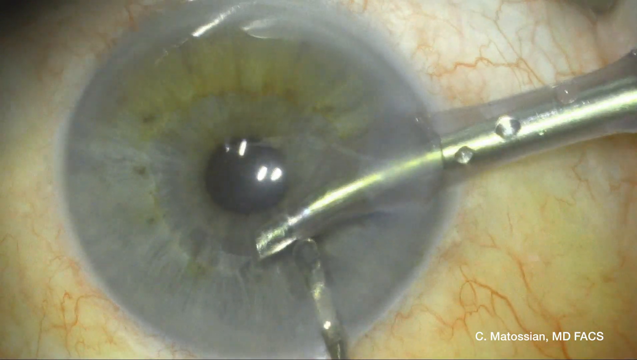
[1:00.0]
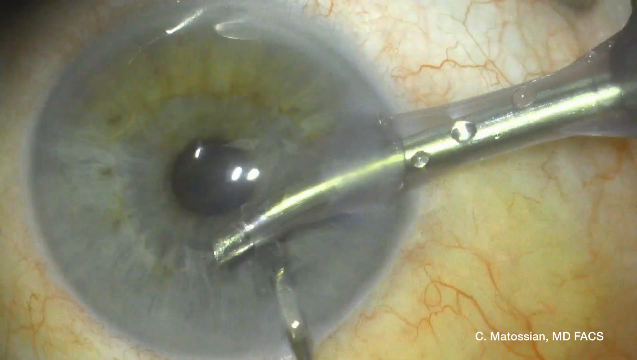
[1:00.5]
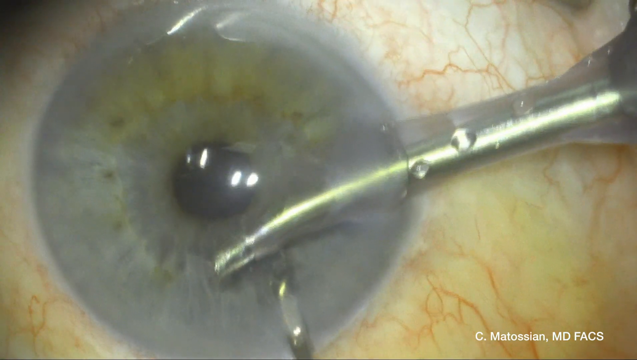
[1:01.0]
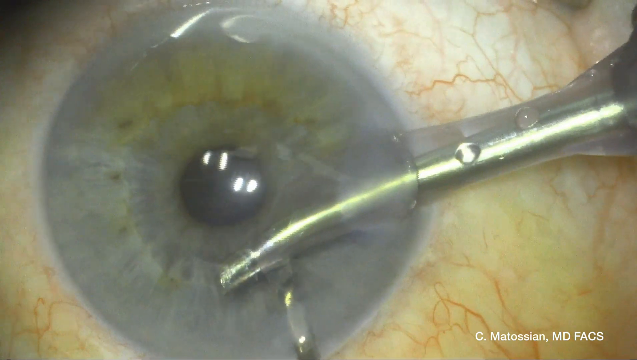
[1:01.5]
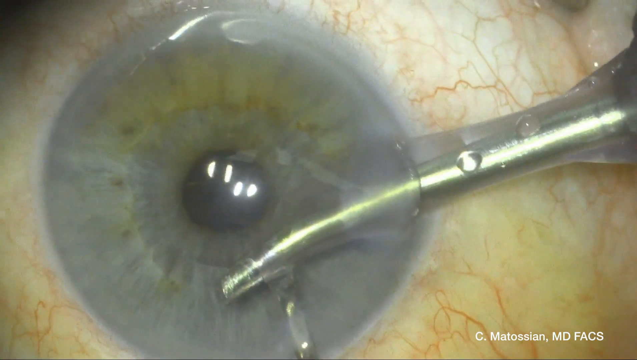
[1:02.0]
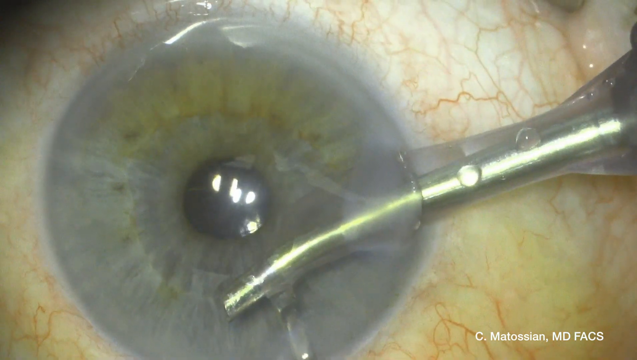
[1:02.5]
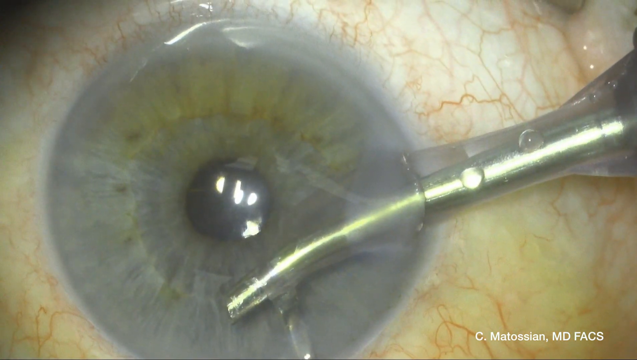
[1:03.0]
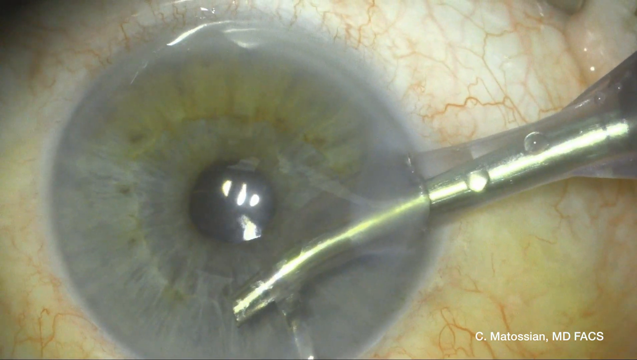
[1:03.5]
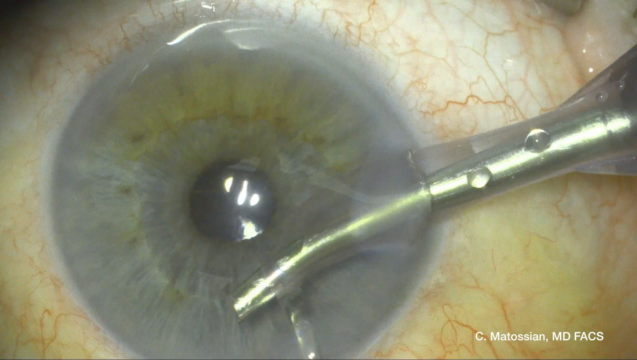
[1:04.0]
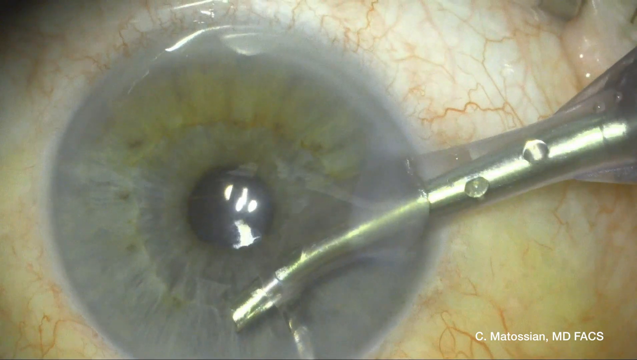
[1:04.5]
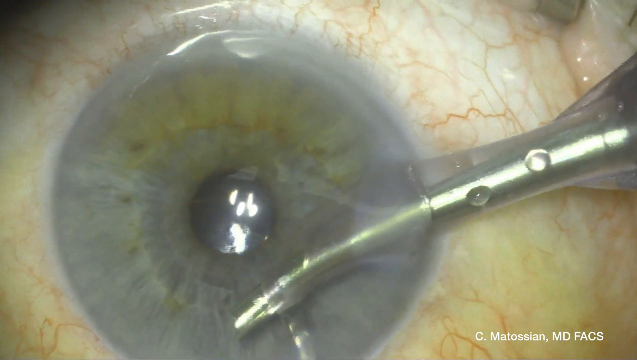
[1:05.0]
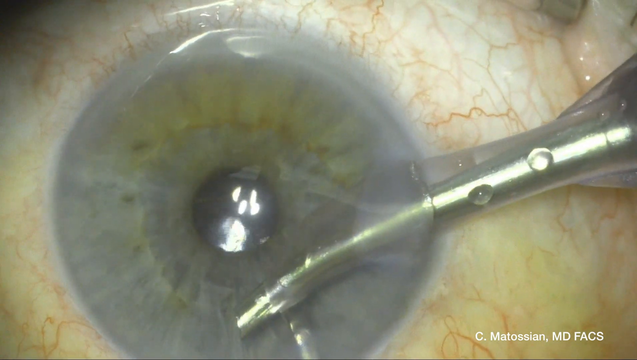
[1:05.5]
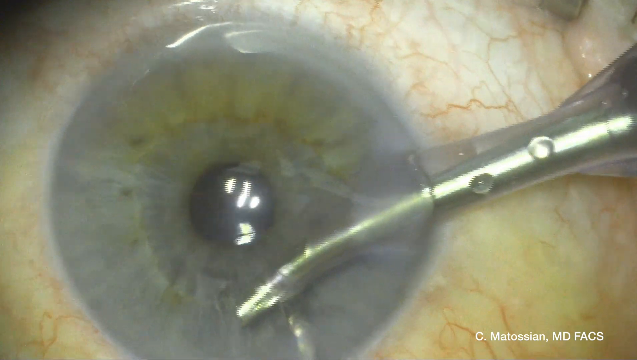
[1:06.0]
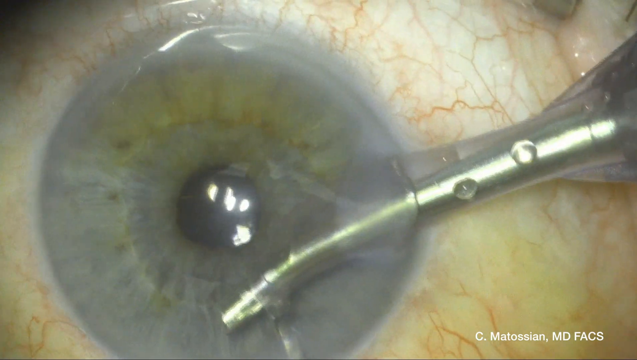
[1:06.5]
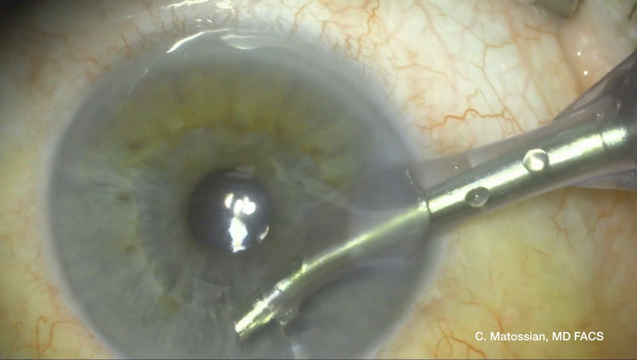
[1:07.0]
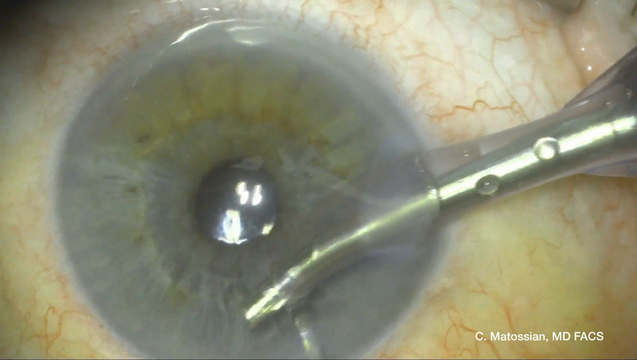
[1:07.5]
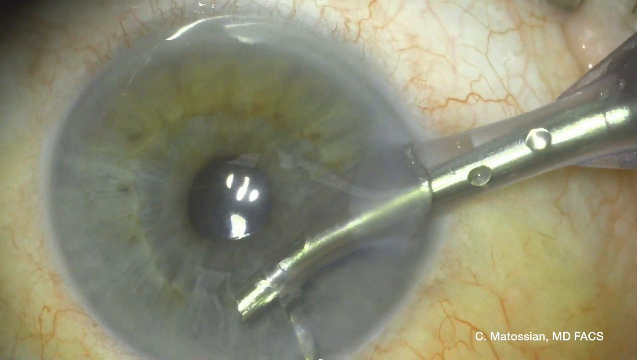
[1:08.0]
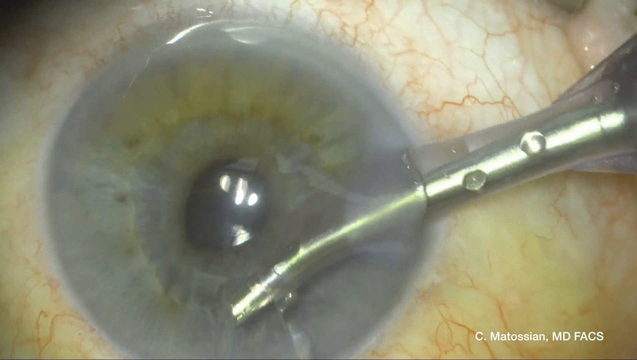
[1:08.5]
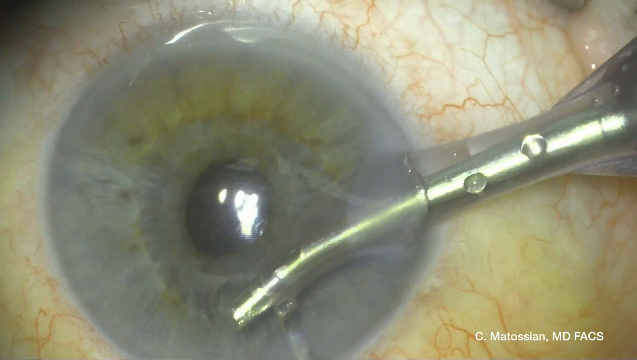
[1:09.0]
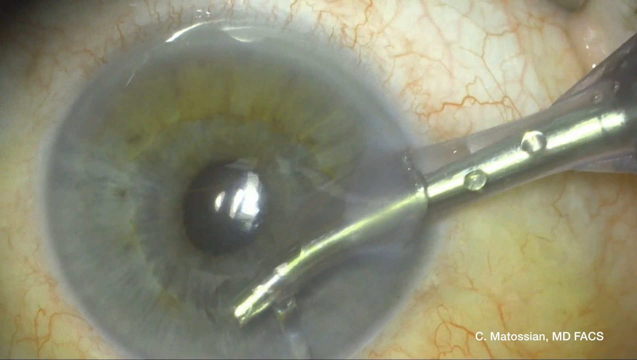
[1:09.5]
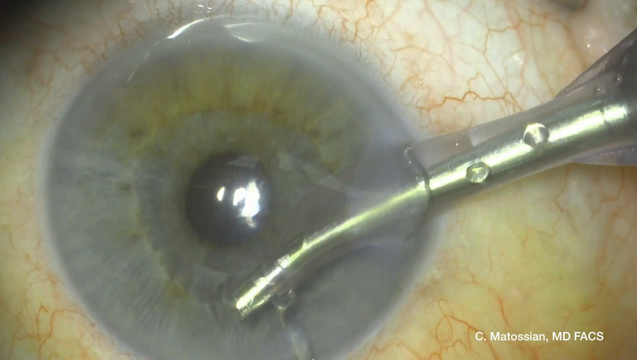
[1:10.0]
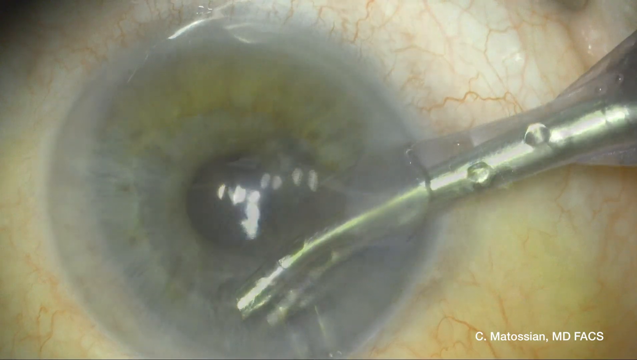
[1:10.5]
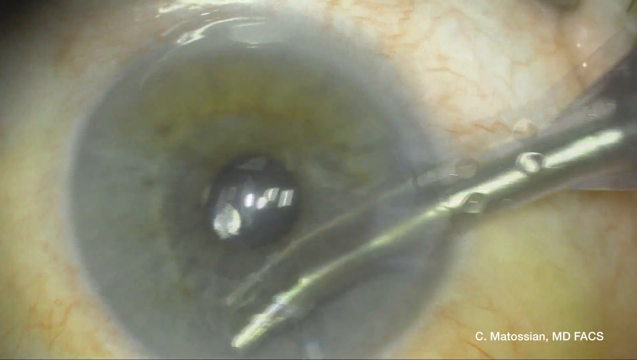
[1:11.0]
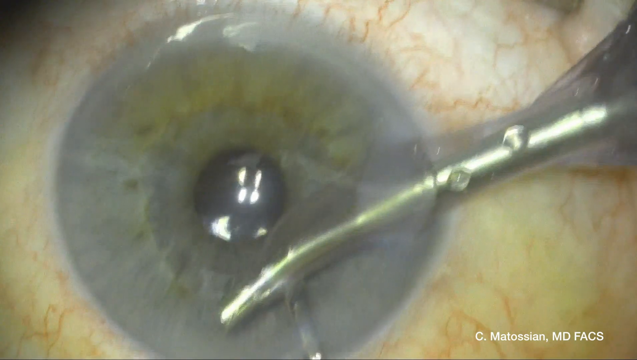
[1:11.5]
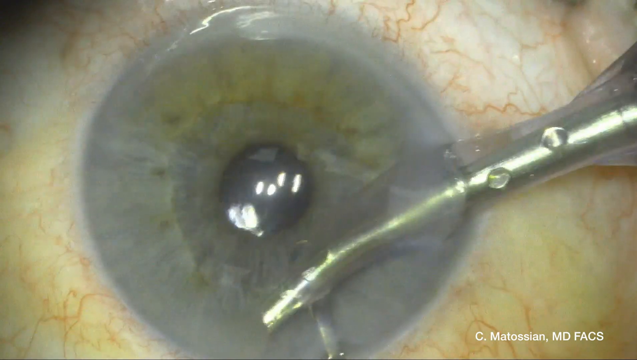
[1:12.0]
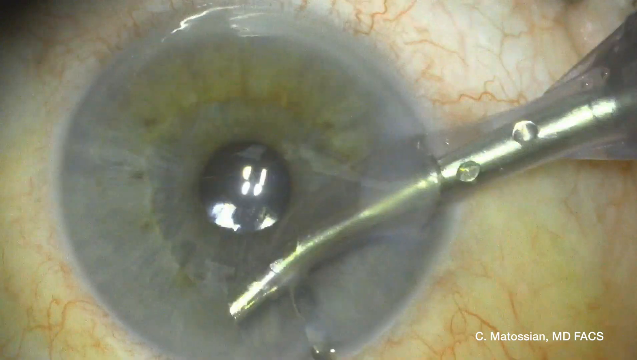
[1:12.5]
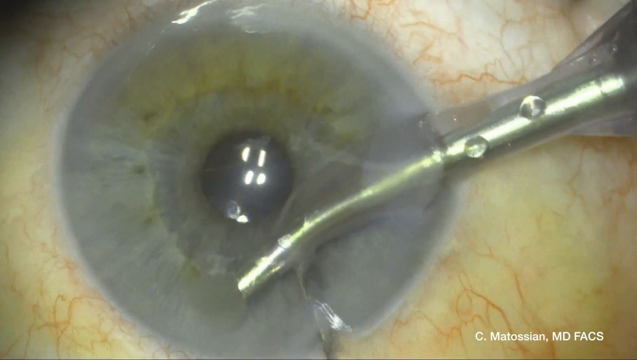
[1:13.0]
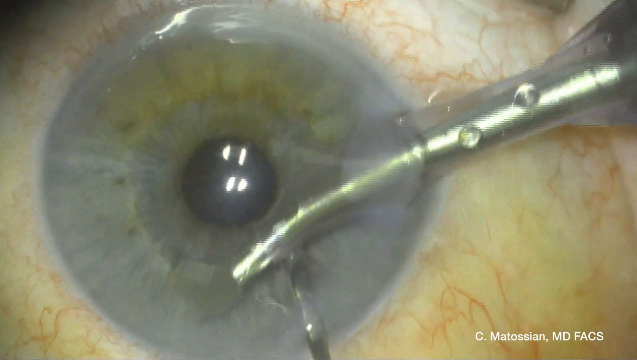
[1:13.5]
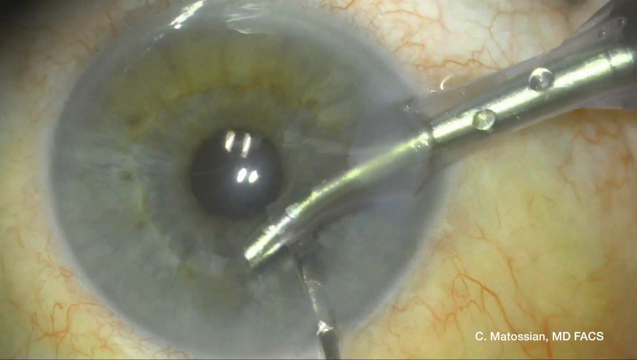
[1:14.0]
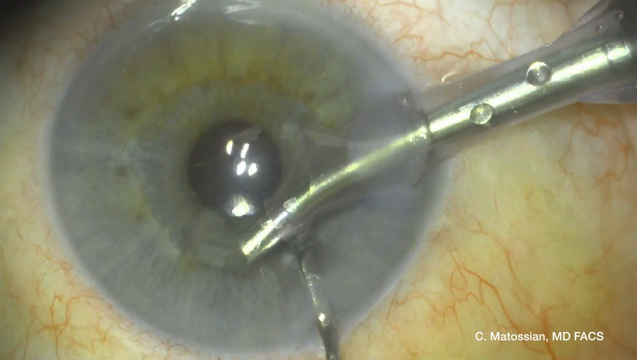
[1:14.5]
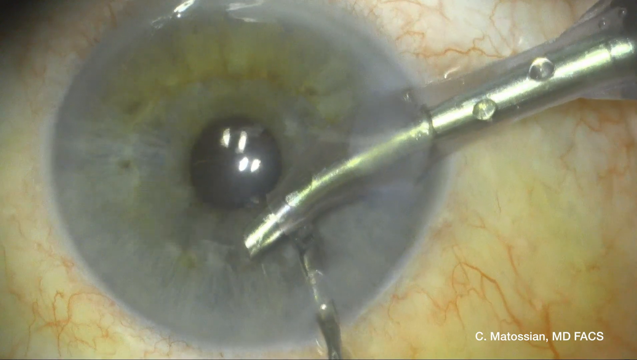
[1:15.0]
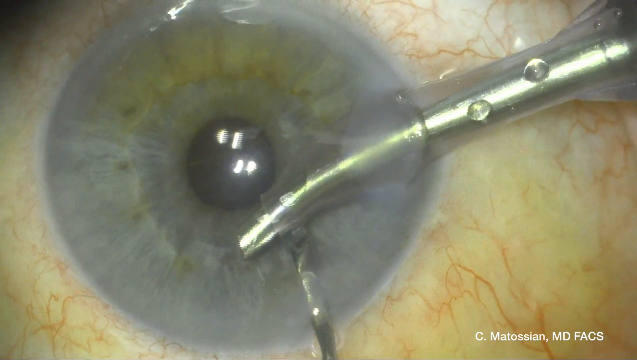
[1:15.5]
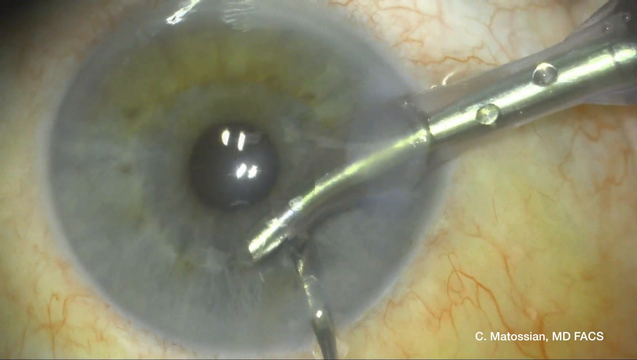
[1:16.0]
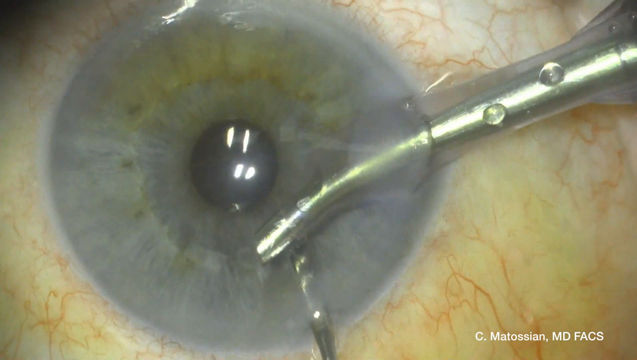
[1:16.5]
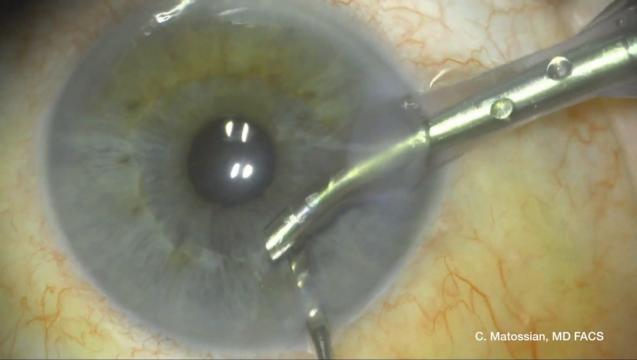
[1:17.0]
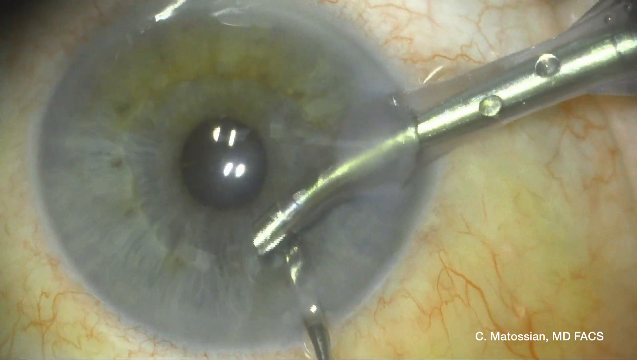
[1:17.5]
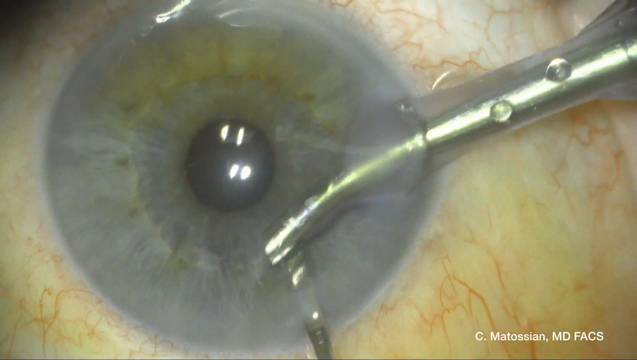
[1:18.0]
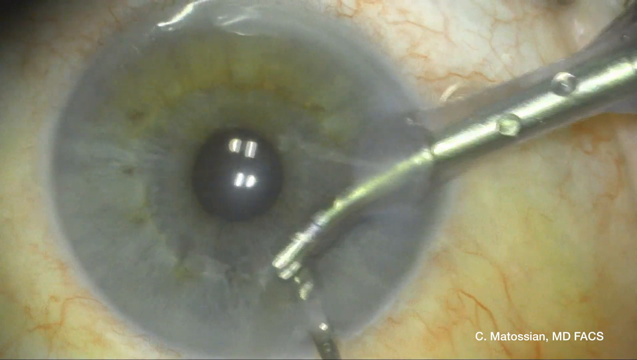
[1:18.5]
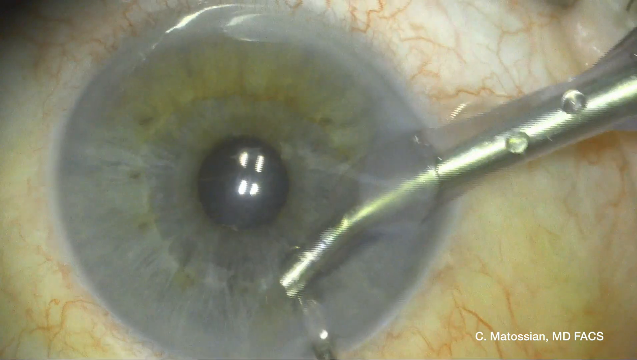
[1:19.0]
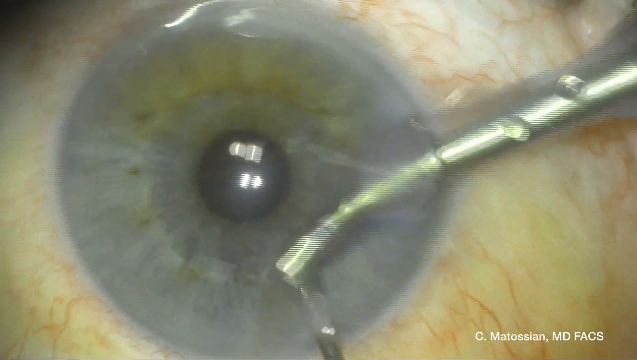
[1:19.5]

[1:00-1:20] A close-up shows an eye with a blue iris and red veins running through the white part of the eye as well as the inner part of the eyelid in the upper right corner. A long metallic tube stretches from the right side under the blue part of the eye, through it and out again, so that it presses out right below the black pupil. The tube is pressed further to the left through the eye and then pressed down. It is pulled back a little and then pressed down further, and the eye undulates a bit. The view shifts and the tube is pulled back out to the right through the eye. Water flows through the tube, touching the eye. The tube is jiggled in place inside and under the blue part of the eye.